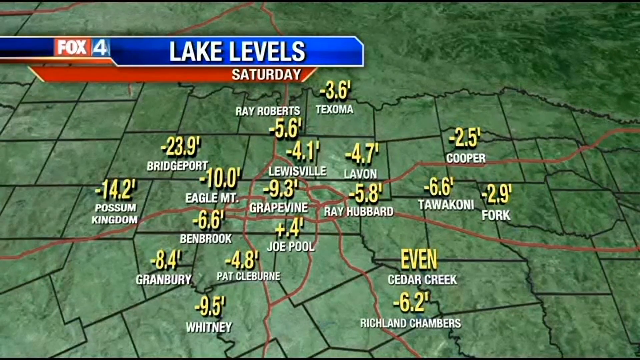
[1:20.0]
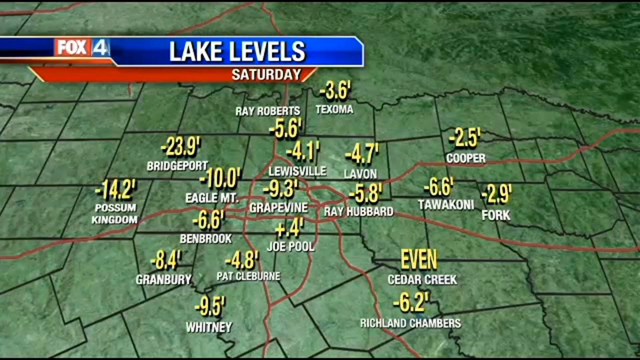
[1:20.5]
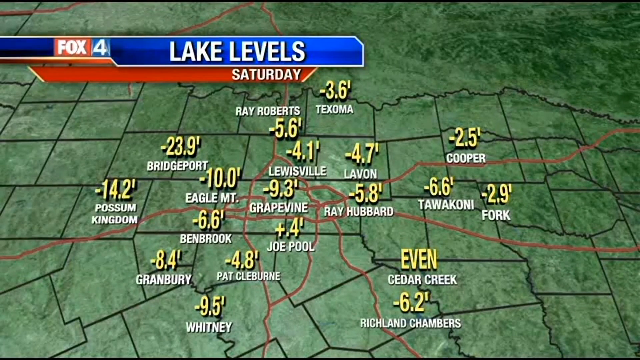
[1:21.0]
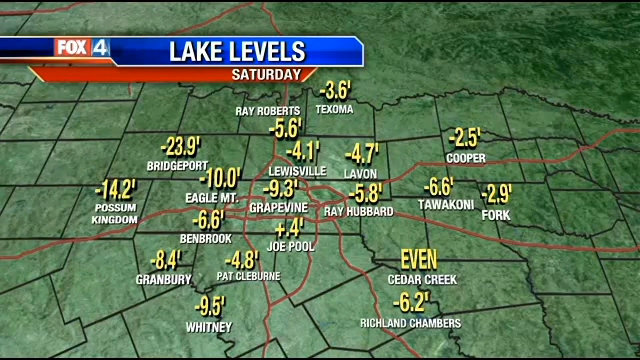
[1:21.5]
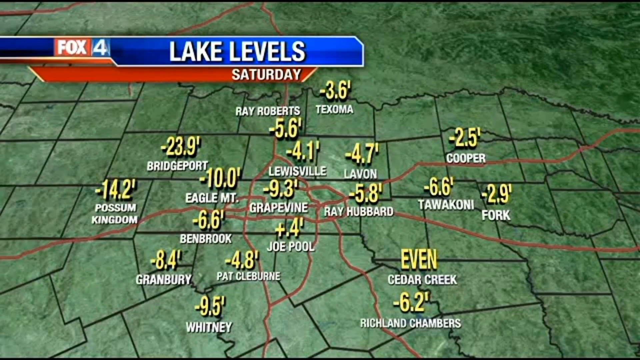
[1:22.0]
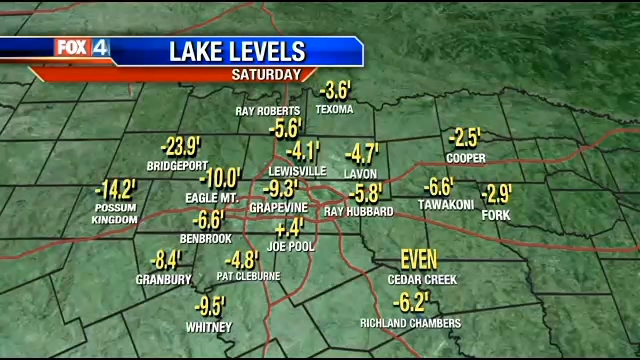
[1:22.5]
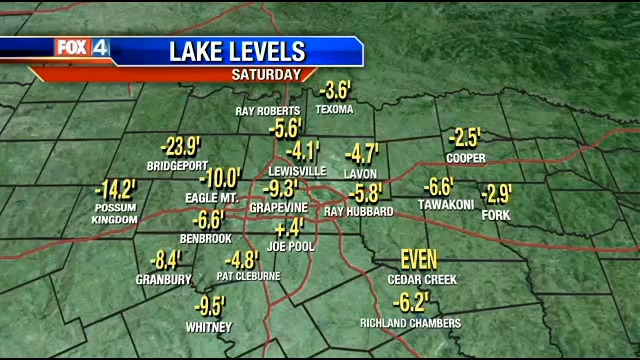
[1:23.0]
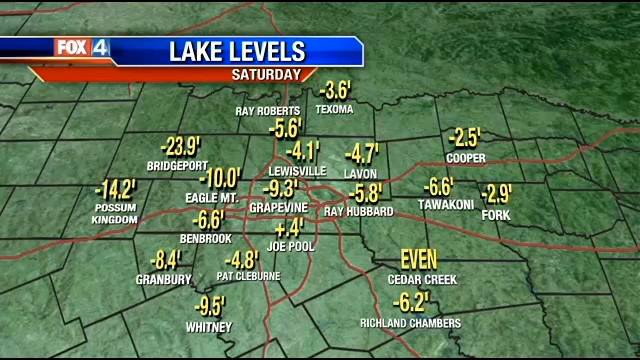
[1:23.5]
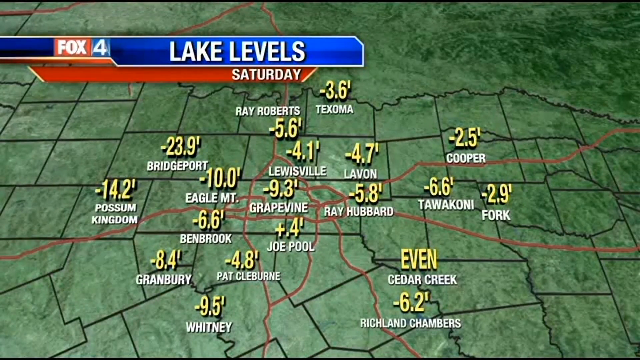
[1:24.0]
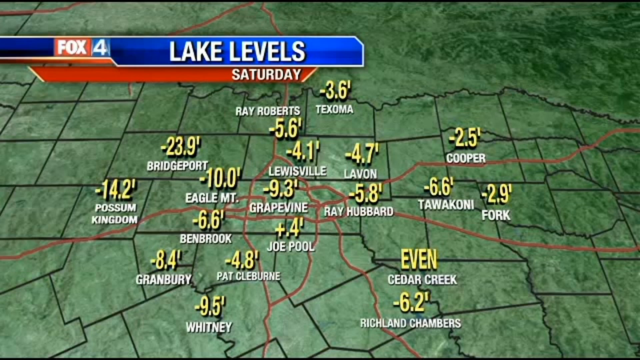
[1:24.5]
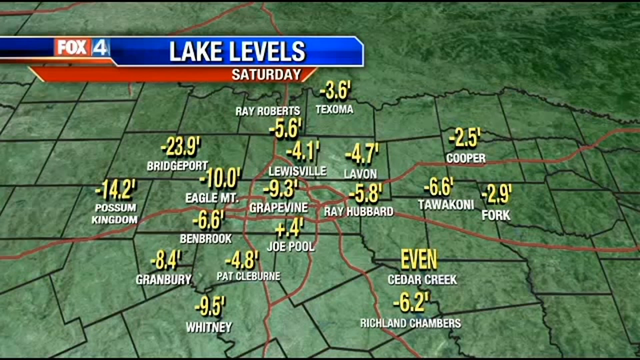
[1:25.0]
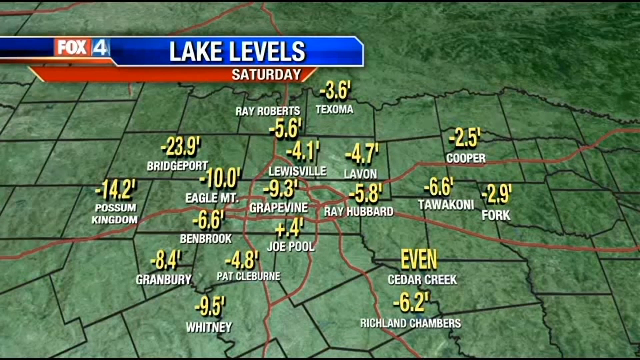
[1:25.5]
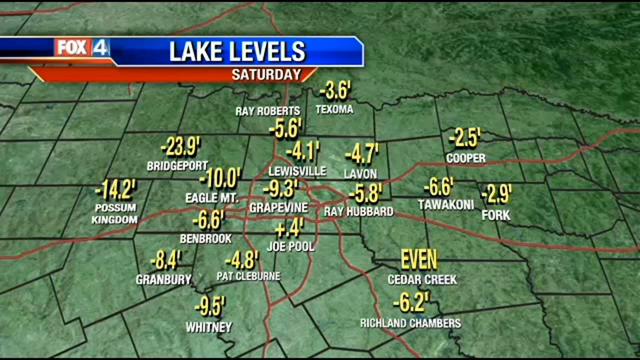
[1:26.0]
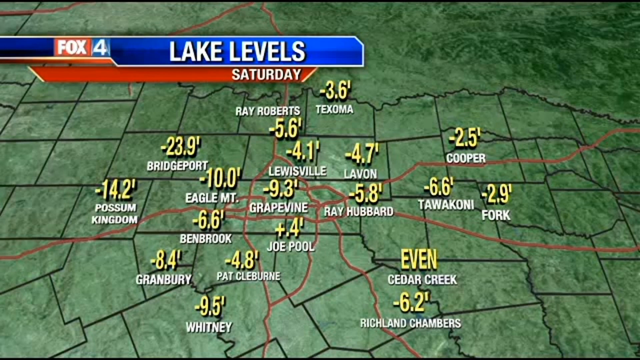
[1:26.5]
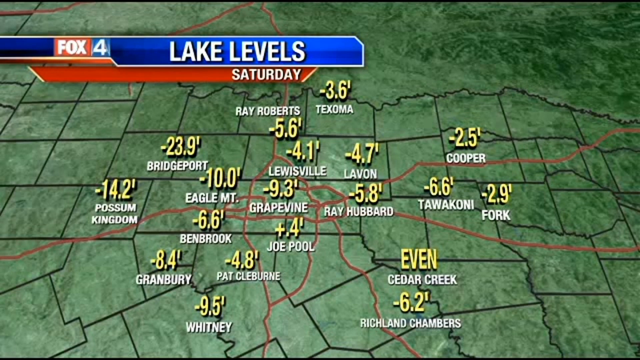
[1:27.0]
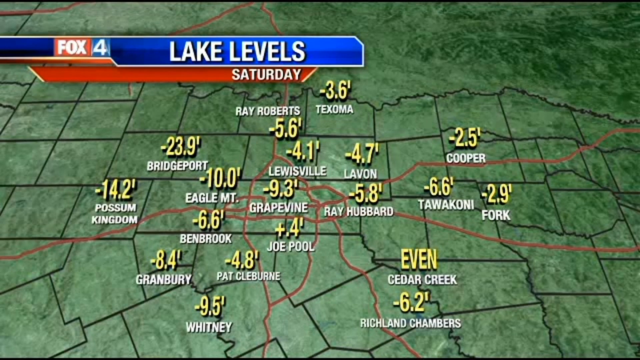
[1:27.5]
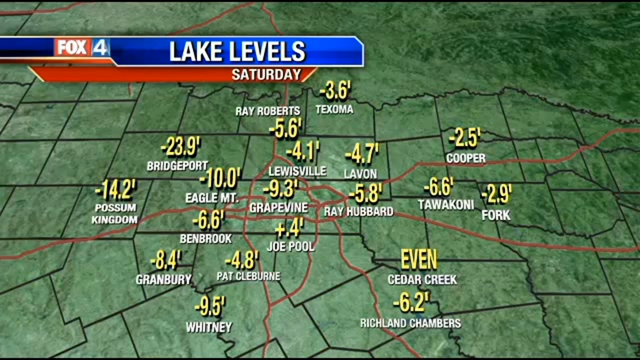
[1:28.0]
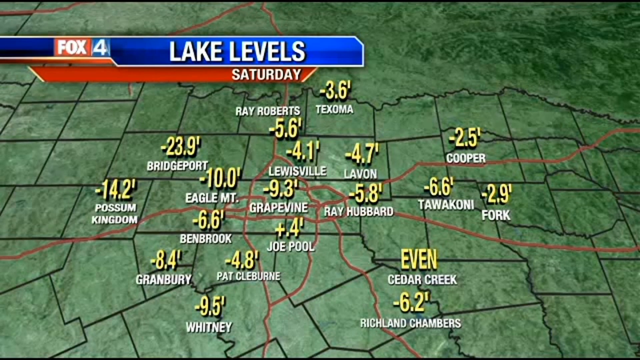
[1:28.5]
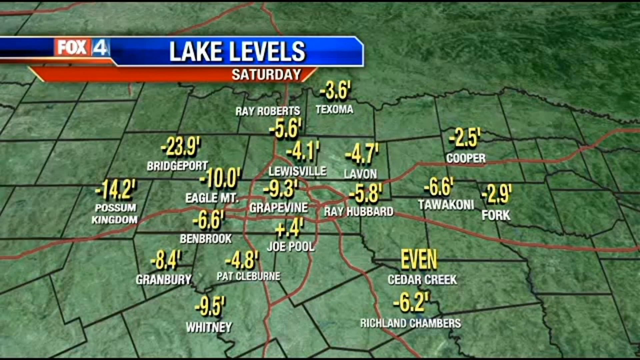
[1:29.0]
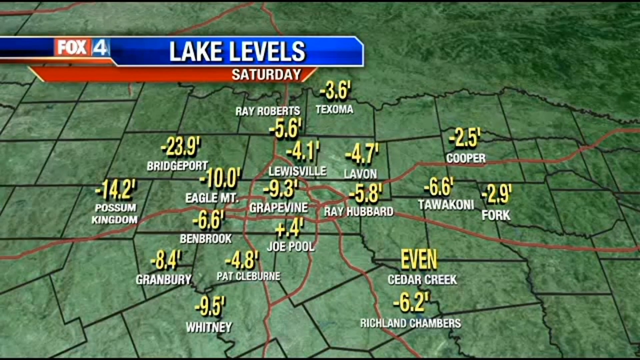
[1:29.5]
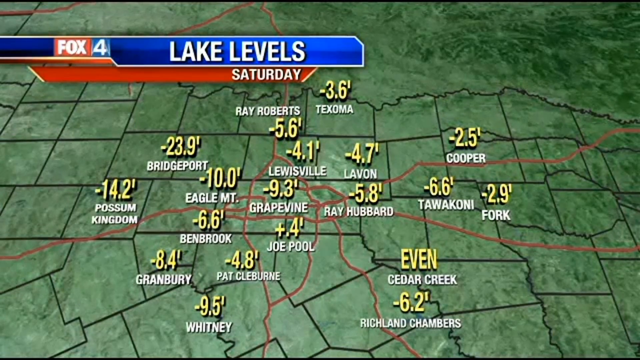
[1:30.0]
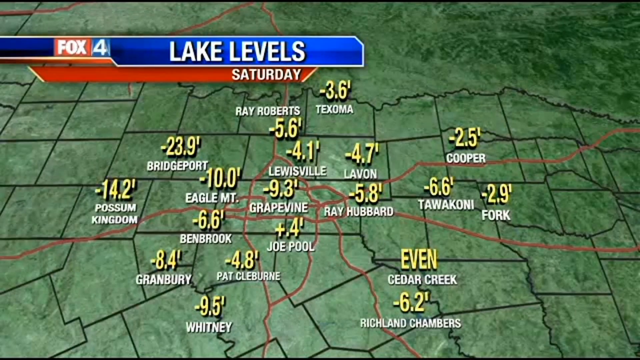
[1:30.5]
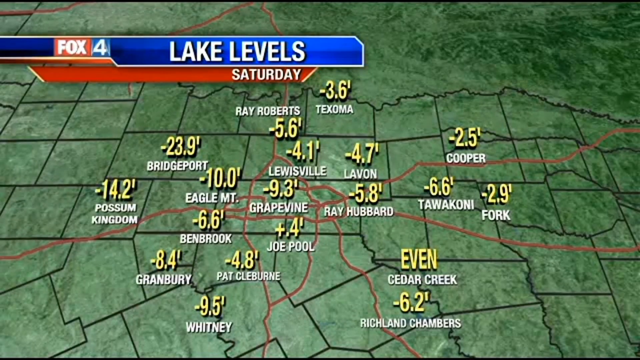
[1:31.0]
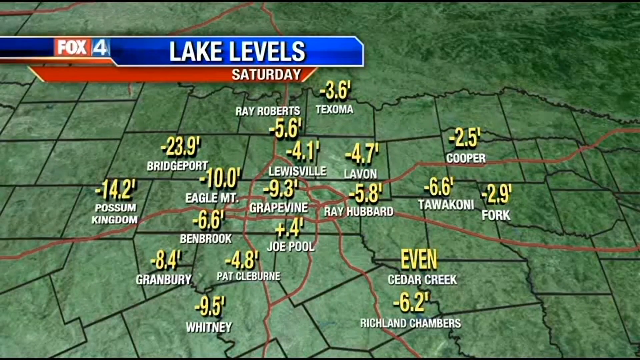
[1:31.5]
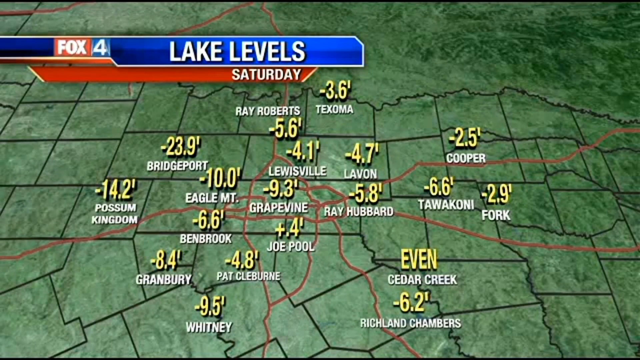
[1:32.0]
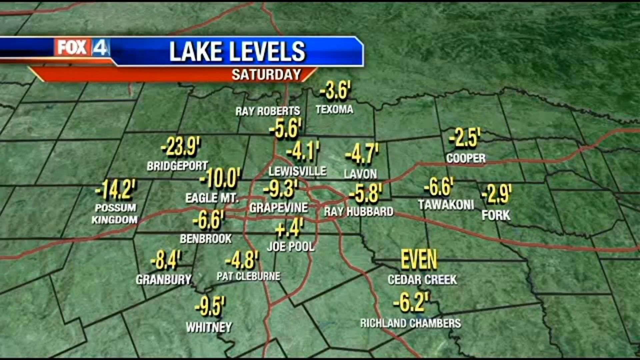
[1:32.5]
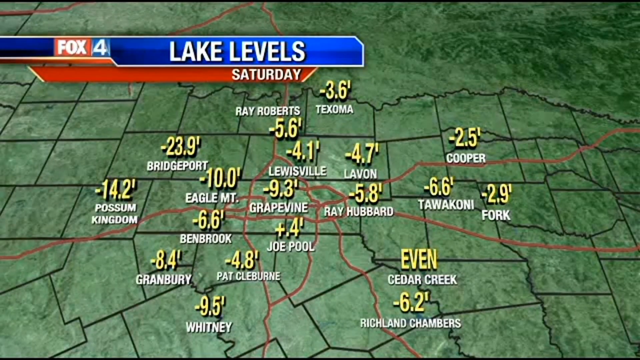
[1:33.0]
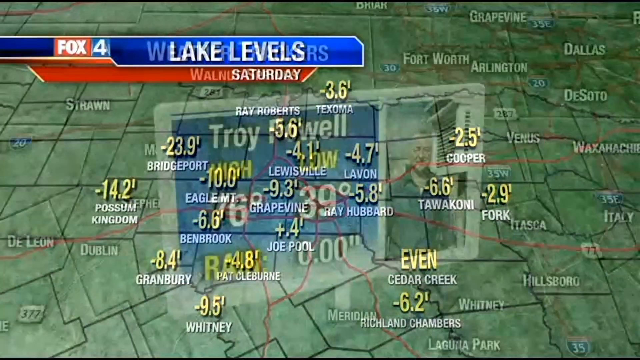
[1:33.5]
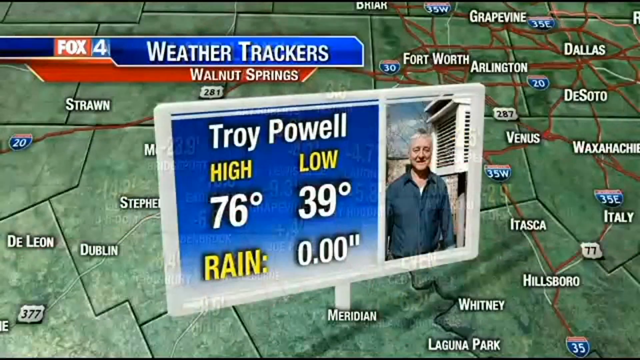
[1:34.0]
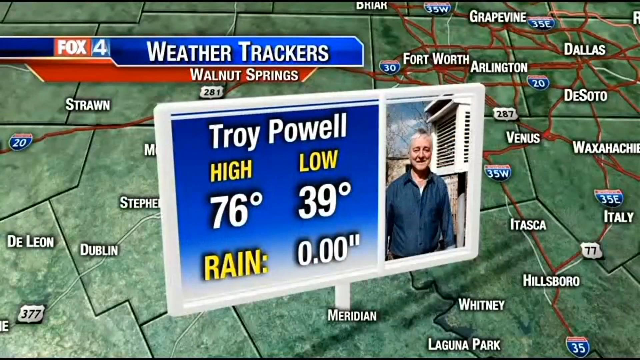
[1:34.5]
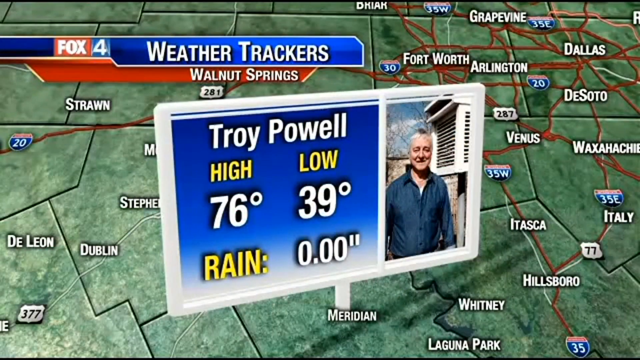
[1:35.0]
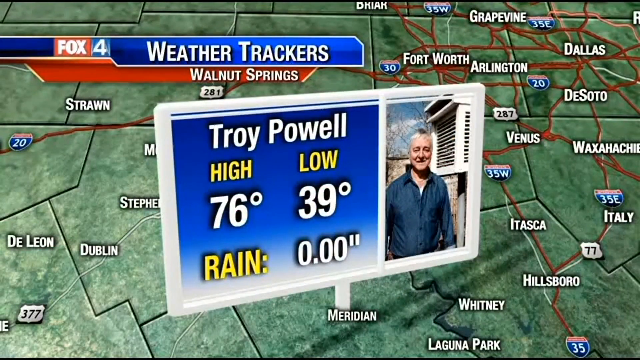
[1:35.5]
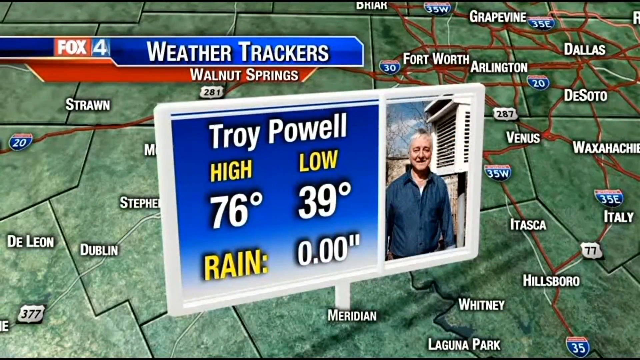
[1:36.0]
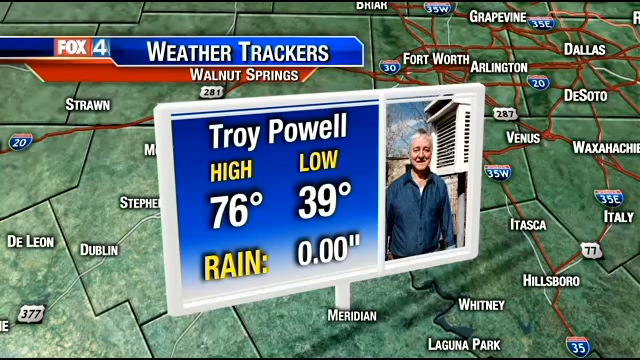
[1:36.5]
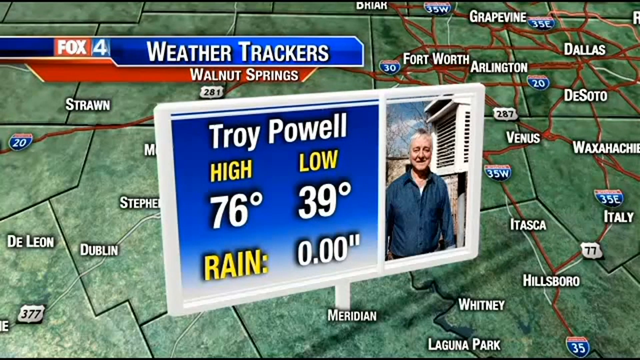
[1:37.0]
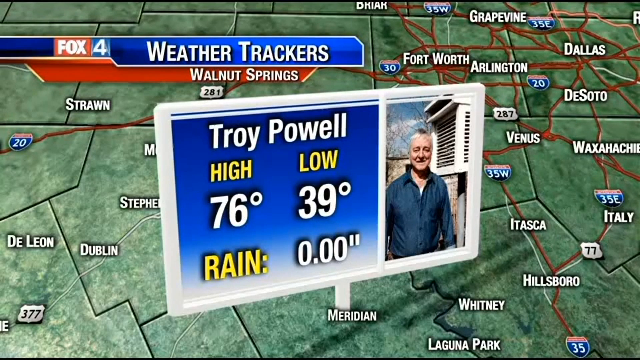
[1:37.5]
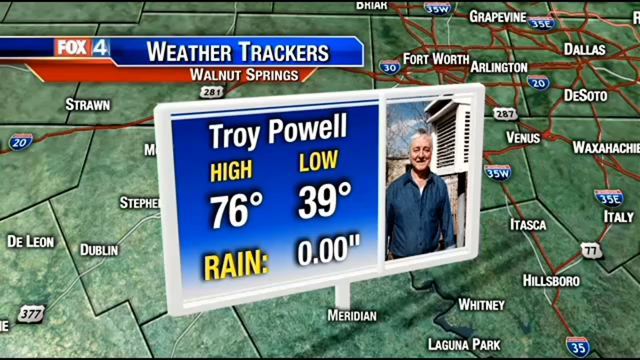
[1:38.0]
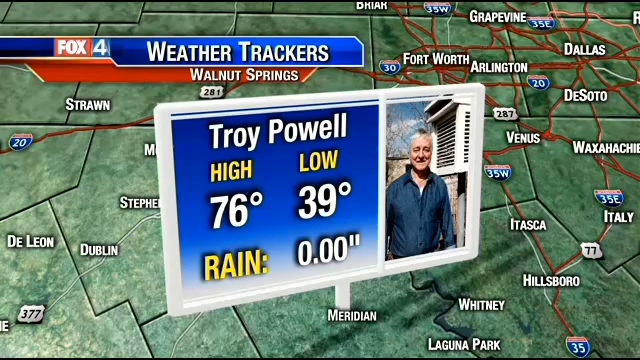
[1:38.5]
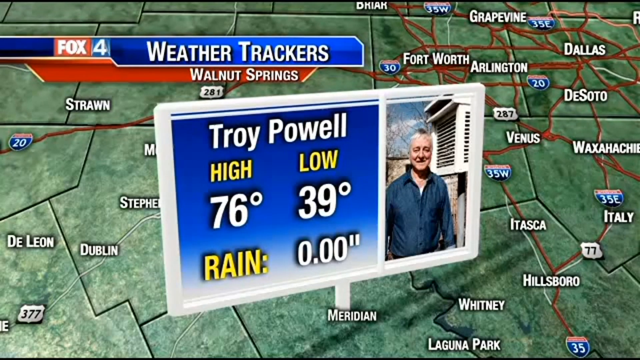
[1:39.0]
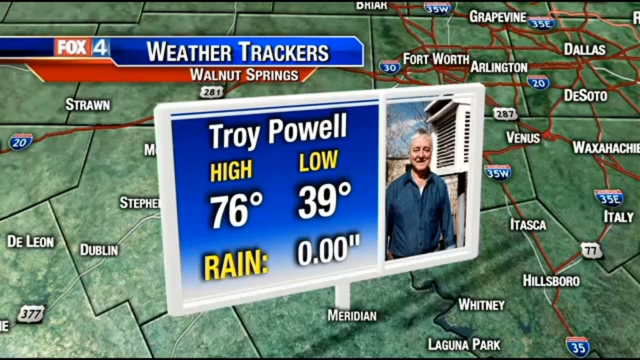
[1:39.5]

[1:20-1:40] A map shows many black borders. A graphic in the foreground reads "lake levels Saturday" in white text. Many numbers in yellow text are on the map, and underneath them are white names of what appear to be lakes. A Fox 4 logo is on the left side of the screen, and in the background there is a blue bar and then a yellow bar. An image appears in the foreground showing a guy wearing a blue dress shirt. On the left side it reads "Troy Powell" in white text, then "high low" in yellow with 76 degrees and 39 degrees, then "rain" in yellow text and "0.00" in white text, all on a frame that kind of looks like a post. That image goes away and the map continues to be shown. The map itself is green with red lines going up and down and left and right.